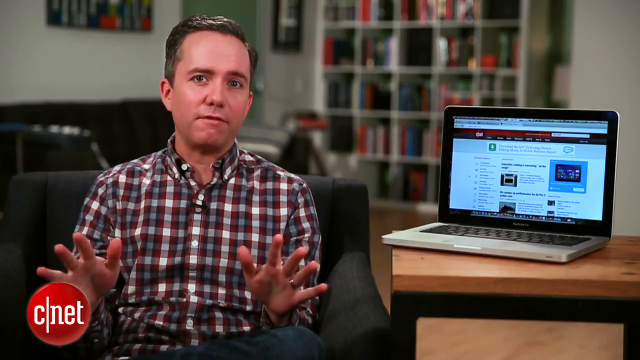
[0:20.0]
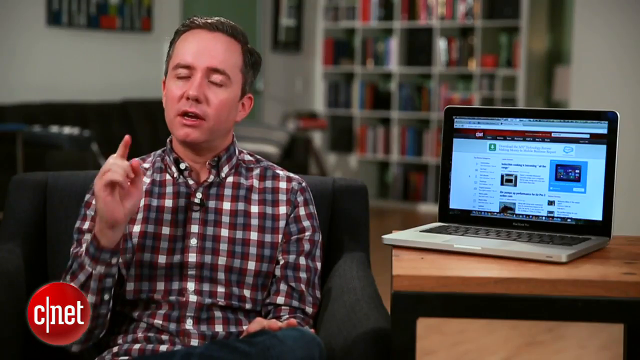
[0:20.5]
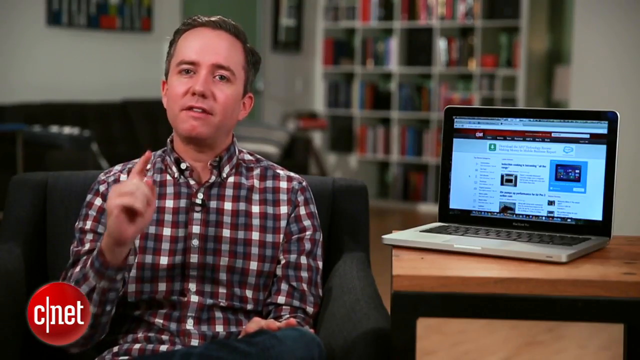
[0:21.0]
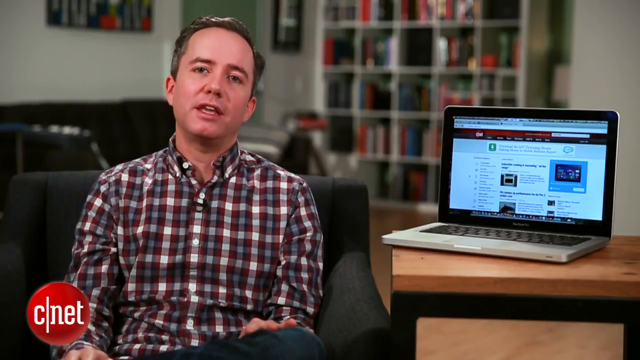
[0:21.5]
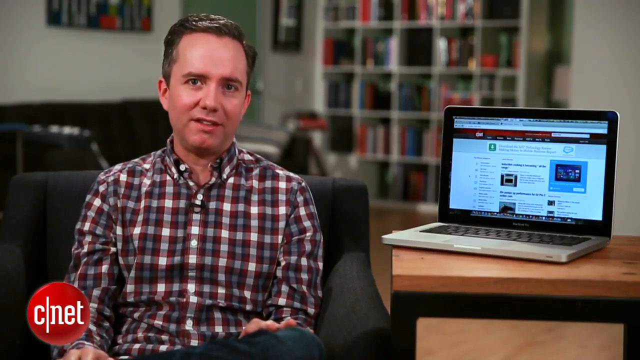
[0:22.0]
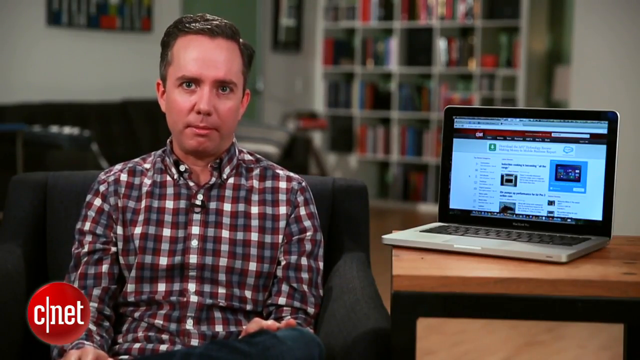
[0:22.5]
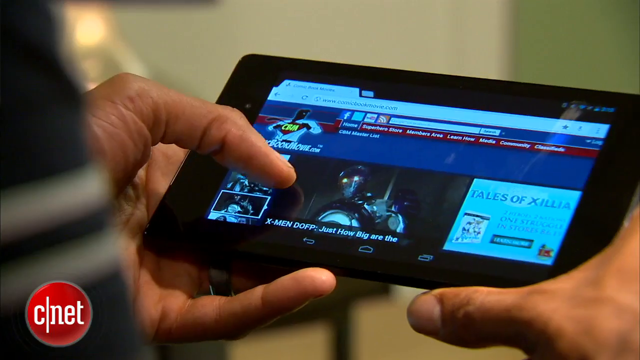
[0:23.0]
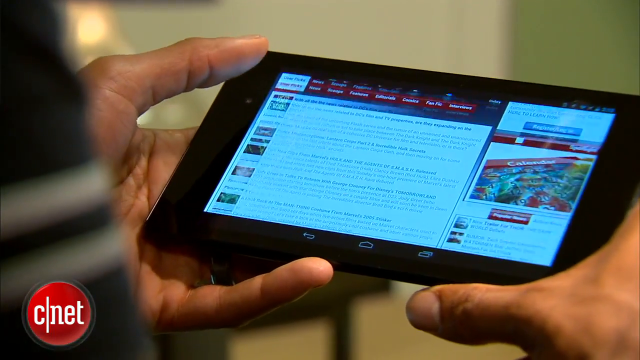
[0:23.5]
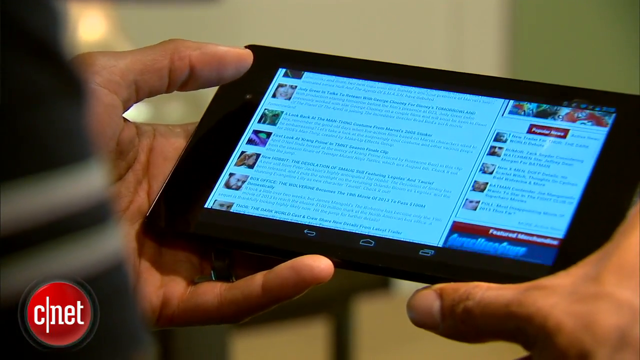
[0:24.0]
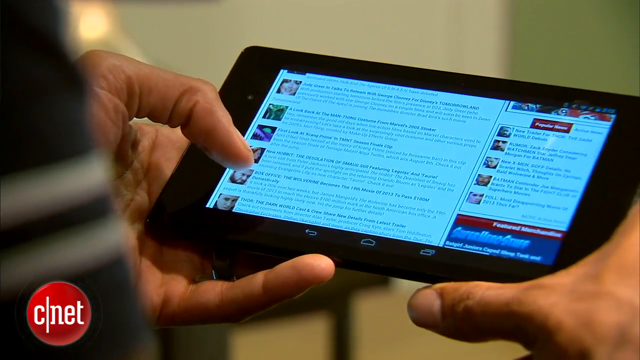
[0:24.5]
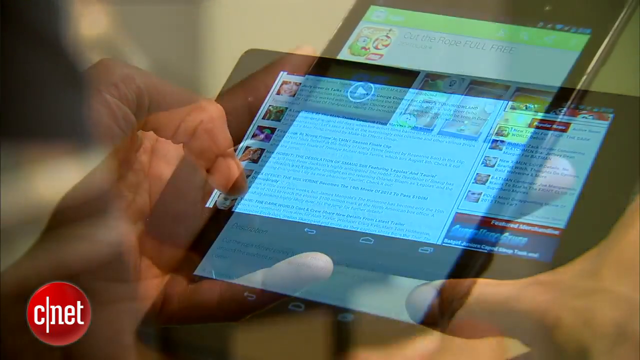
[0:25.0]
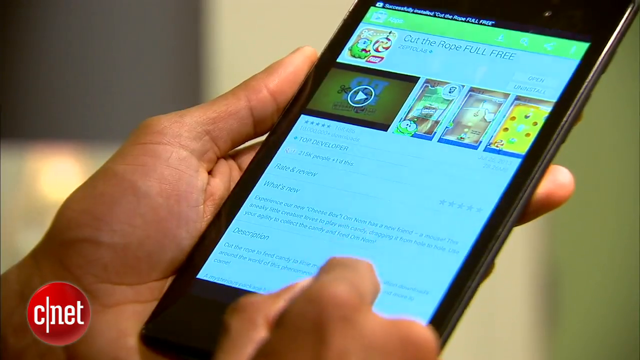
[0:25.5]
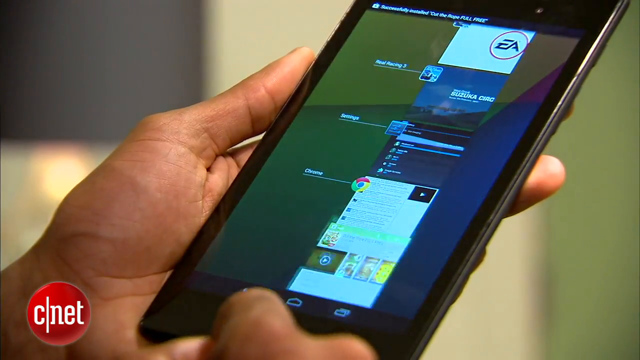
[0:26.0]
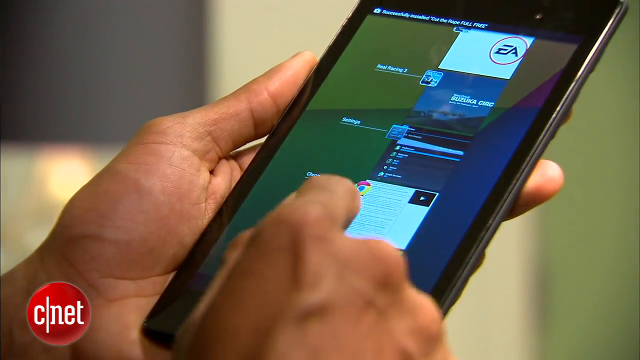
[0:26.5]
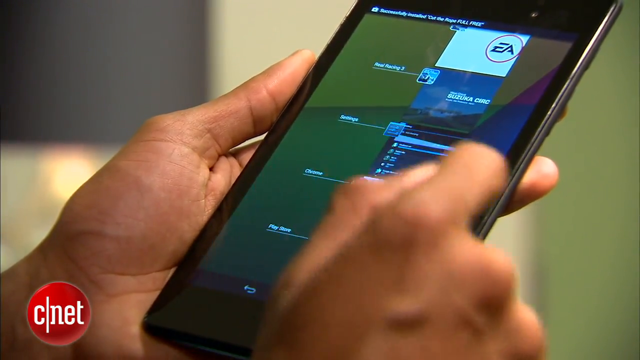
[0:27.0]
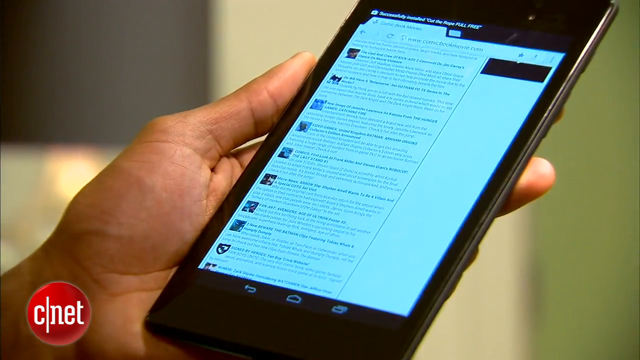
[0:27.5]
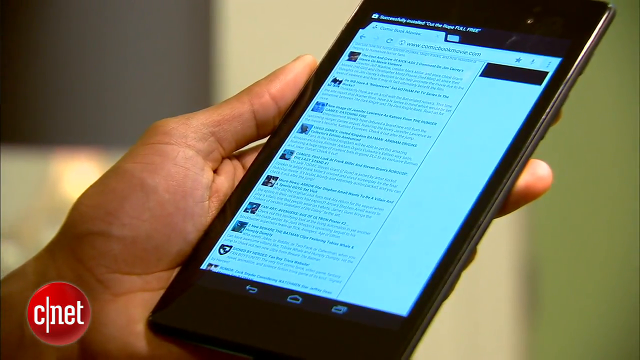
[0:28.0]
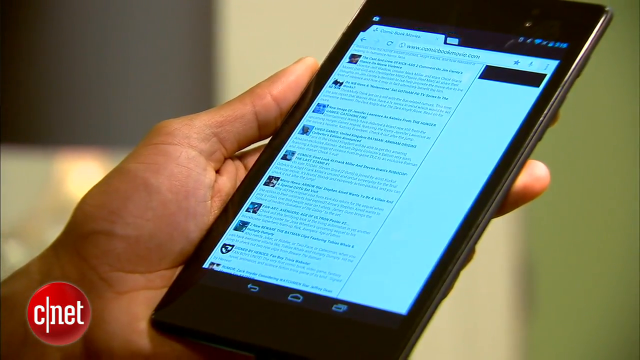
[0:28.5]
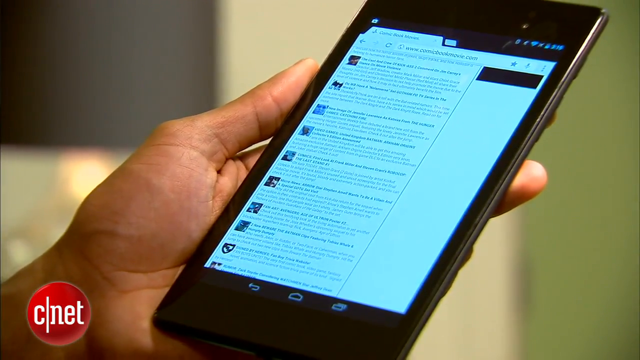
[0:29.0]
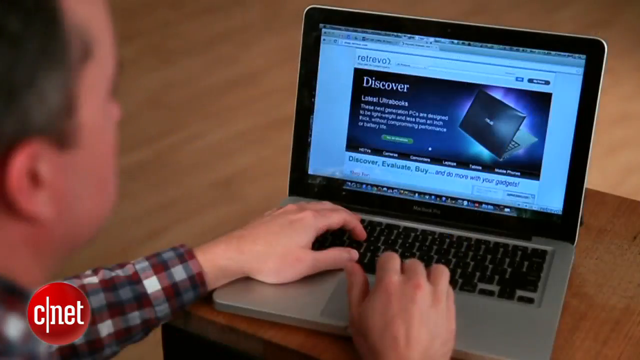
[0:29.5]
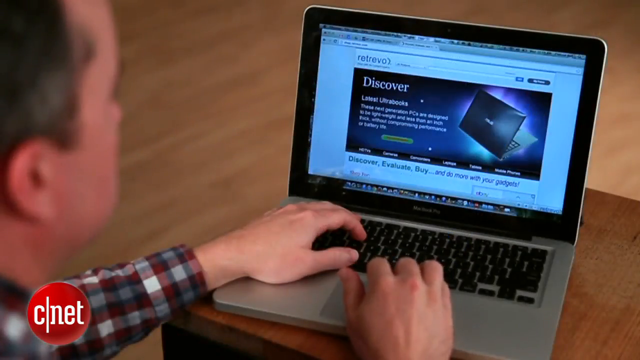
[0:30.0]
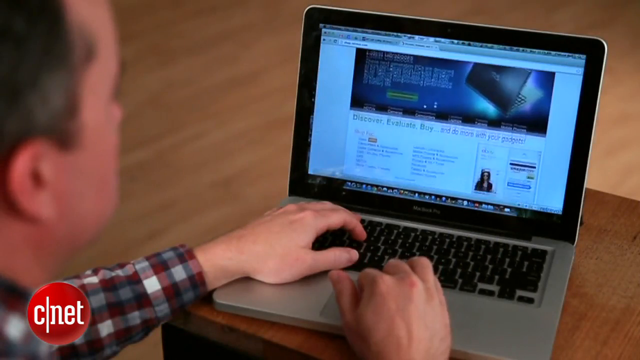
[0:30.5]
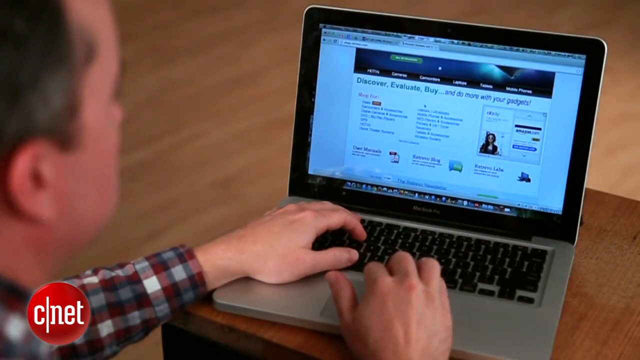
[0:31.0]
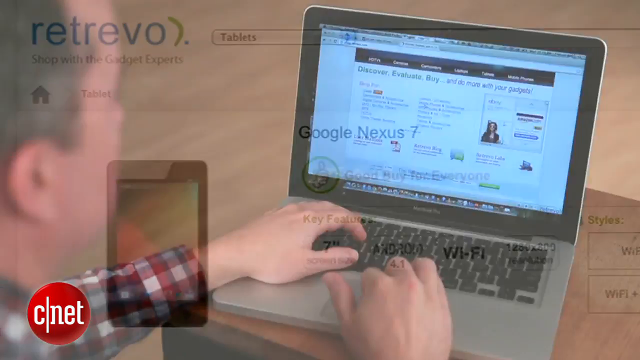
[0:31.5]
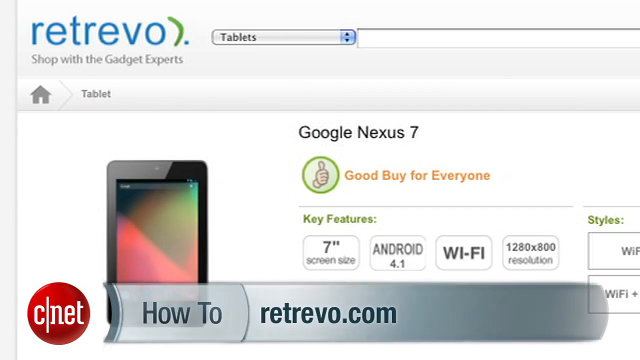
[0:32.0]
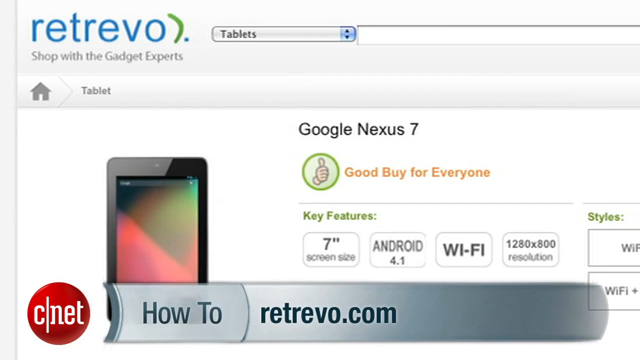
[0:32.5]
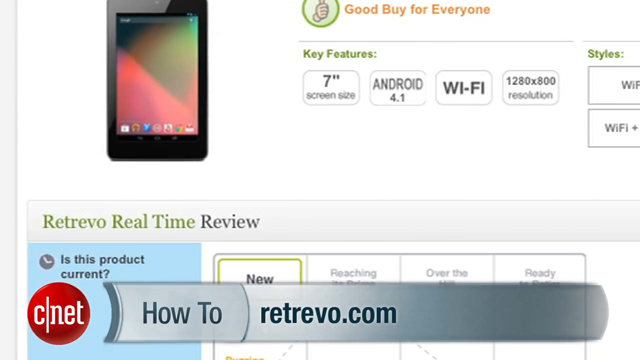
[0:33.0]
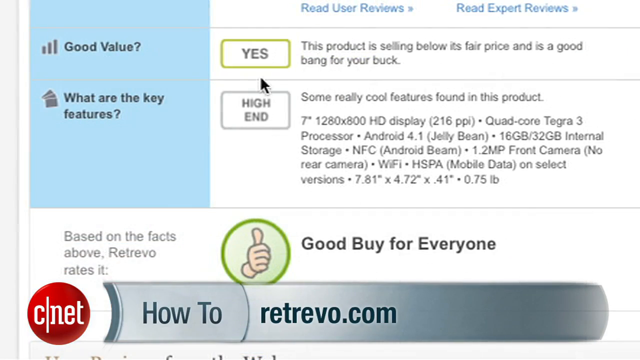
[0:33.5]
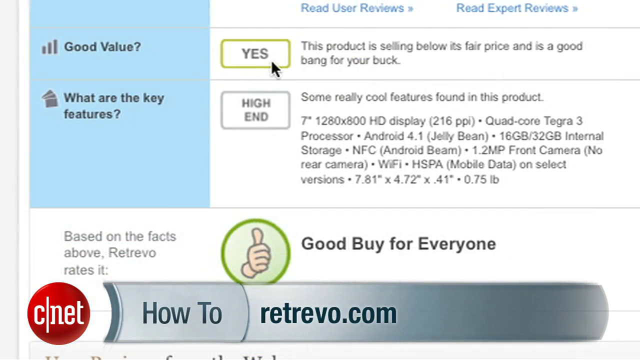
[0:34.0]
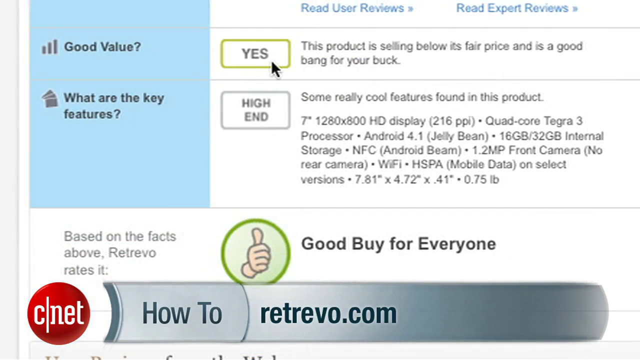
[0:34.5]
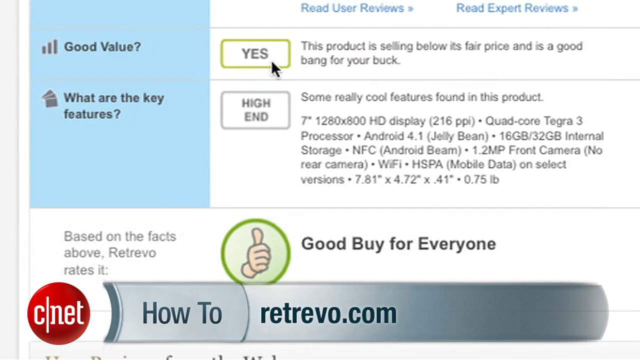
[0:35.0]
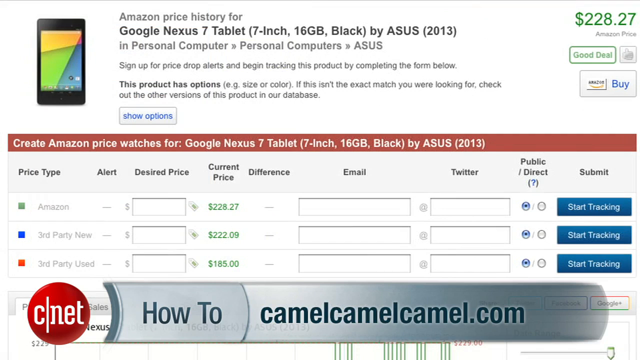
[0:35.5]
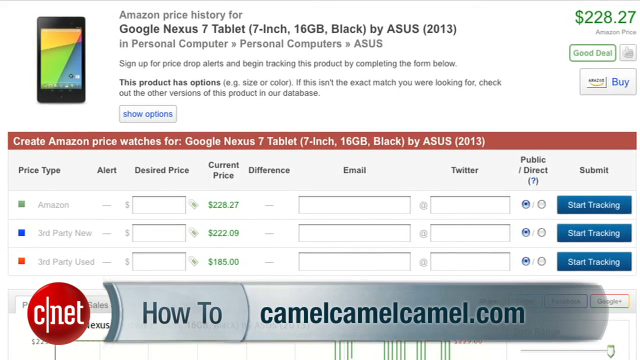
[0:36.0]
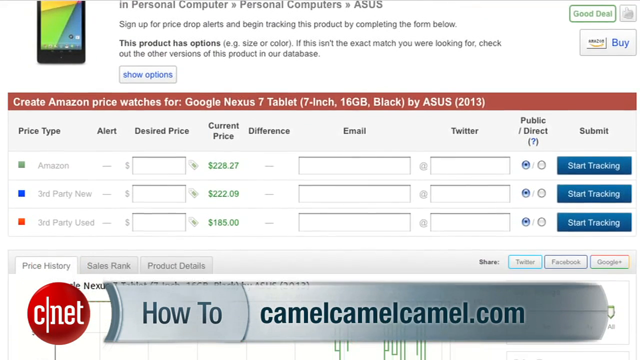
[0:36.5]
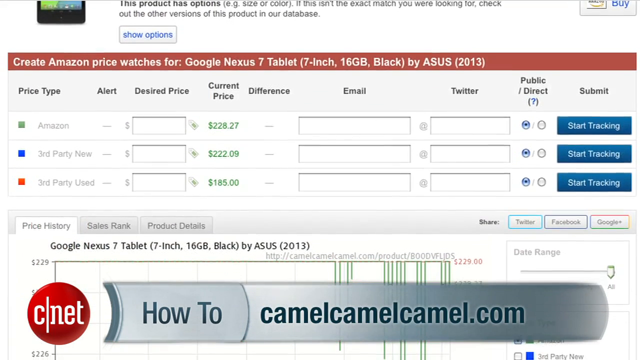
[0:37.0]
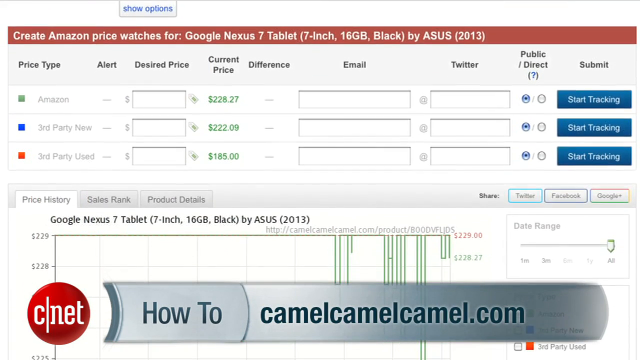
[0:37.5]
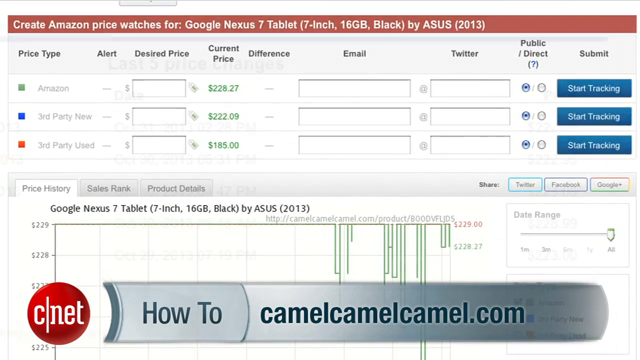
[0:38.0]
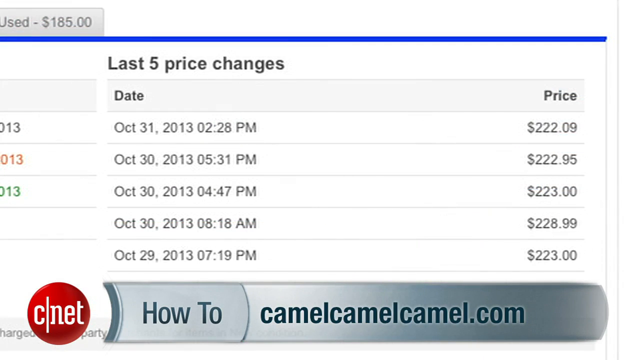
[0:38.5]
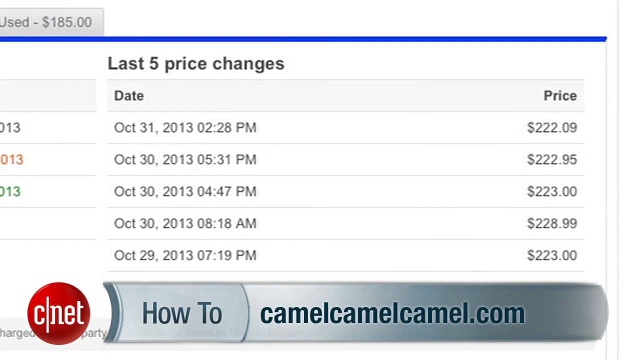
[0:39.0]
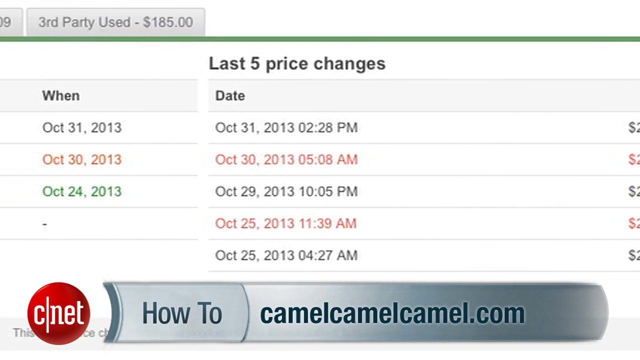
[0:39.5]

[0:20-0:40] The man continues to talk and points at the camera. A close-up shows a smartphone, apparently an Android phone, with someone navigating in the Chrome browser. The scene shifts to someone working on a MacBook computer, with a closer look at the screen showing a website with information on products and data about price points: price type, difference, price changes, and dates. It appears to be comparing prices for a Google Nexus 7 phone, with dates going back to 2013 in the price information. The man wears a gray, white, and red flannel shirt and has brown hair.